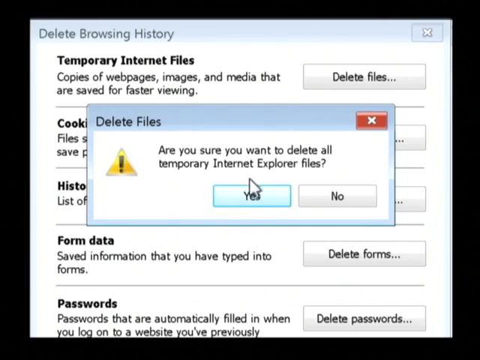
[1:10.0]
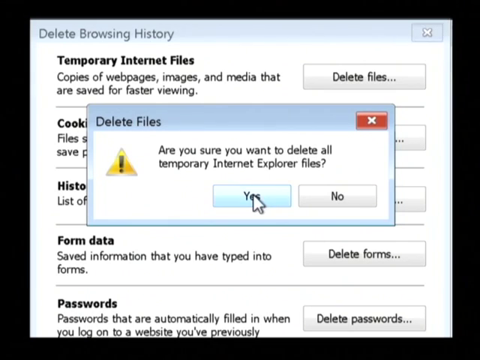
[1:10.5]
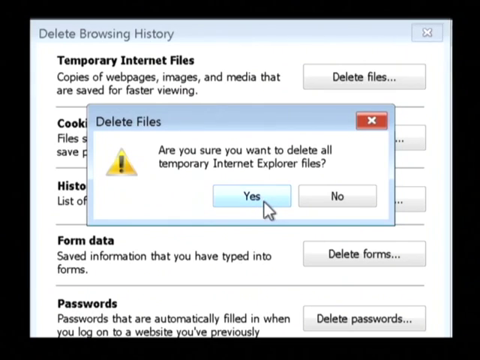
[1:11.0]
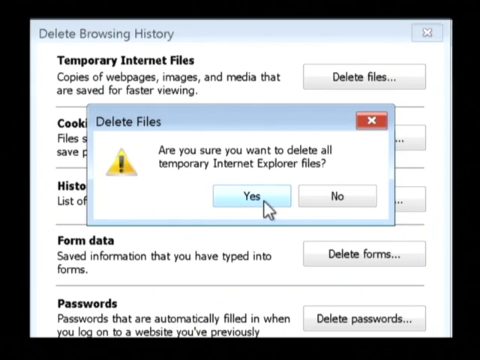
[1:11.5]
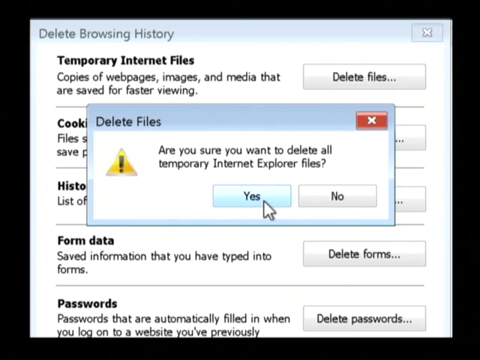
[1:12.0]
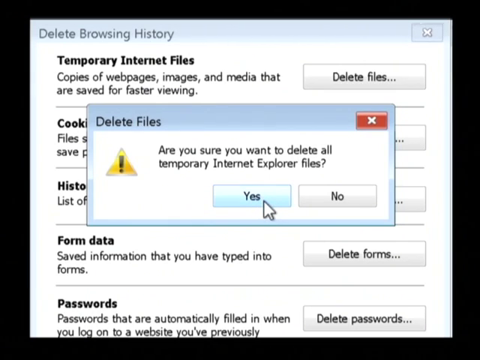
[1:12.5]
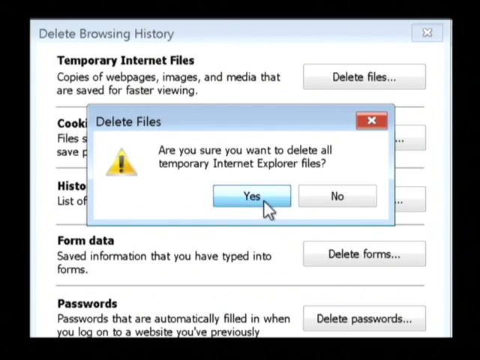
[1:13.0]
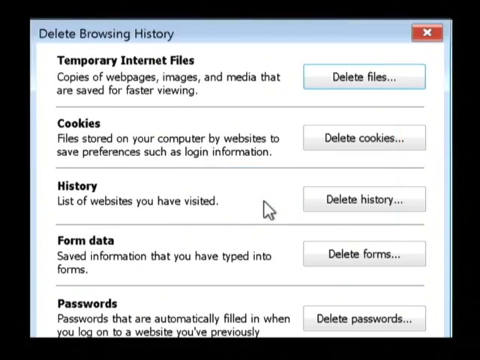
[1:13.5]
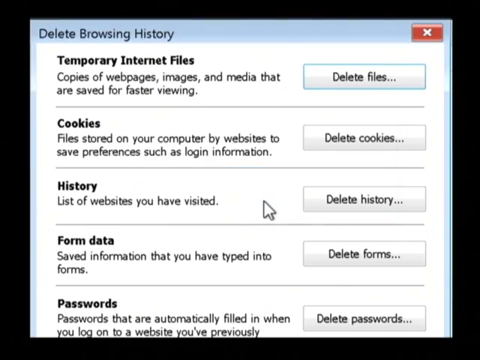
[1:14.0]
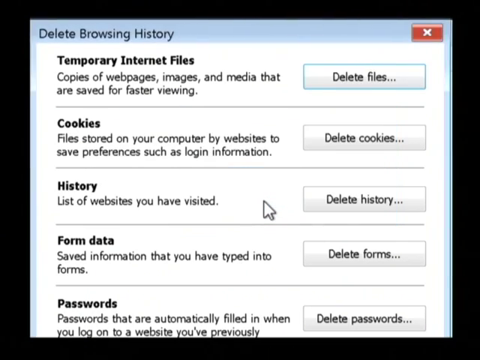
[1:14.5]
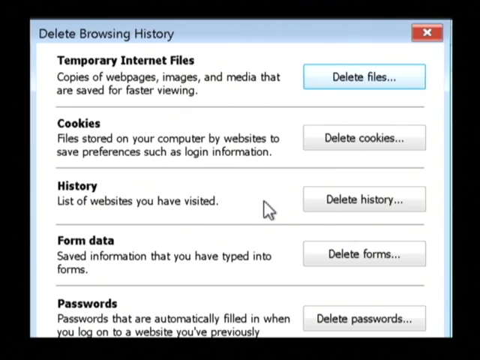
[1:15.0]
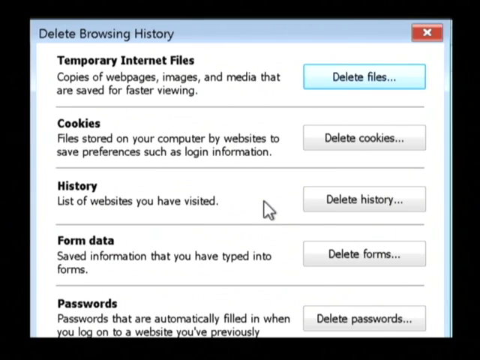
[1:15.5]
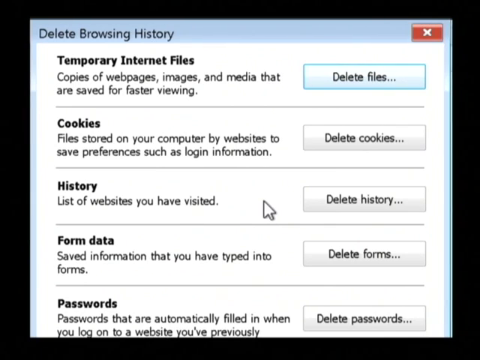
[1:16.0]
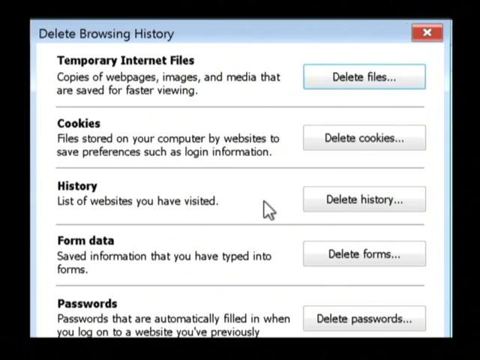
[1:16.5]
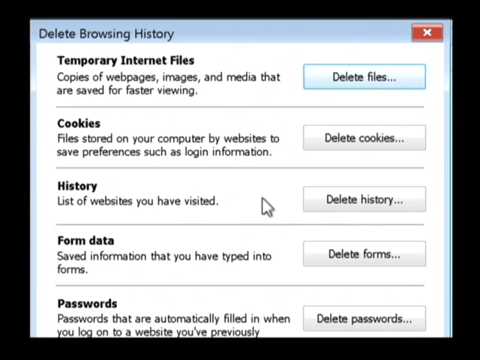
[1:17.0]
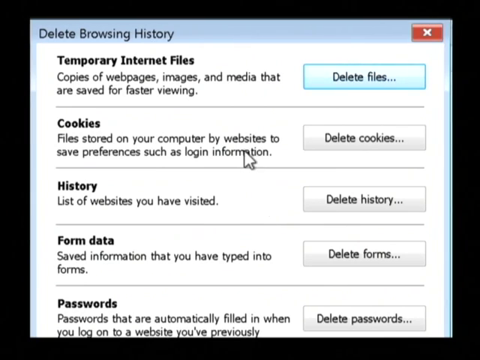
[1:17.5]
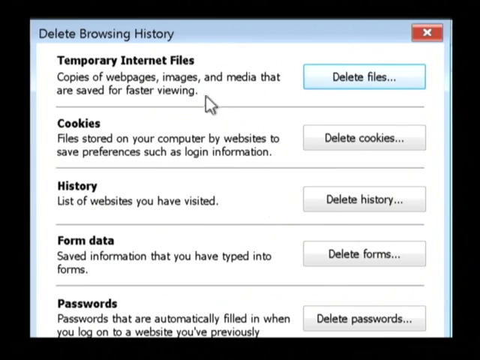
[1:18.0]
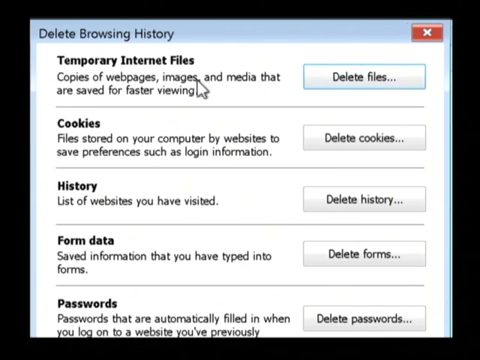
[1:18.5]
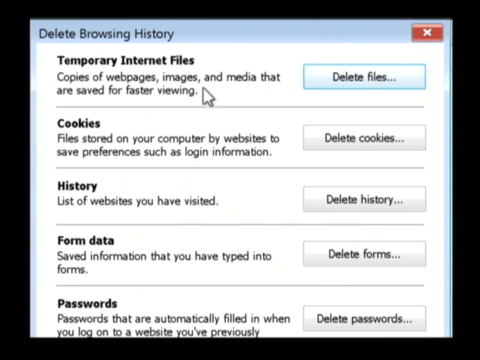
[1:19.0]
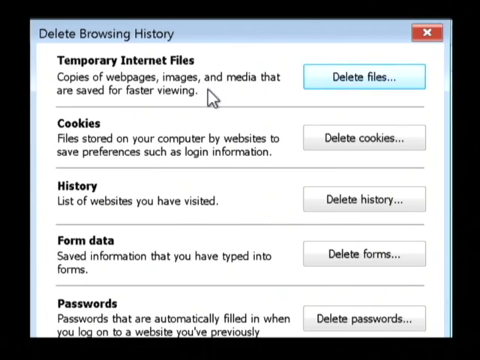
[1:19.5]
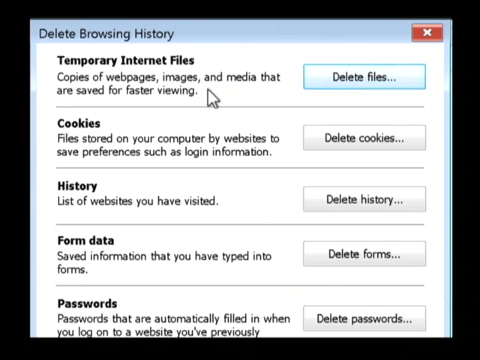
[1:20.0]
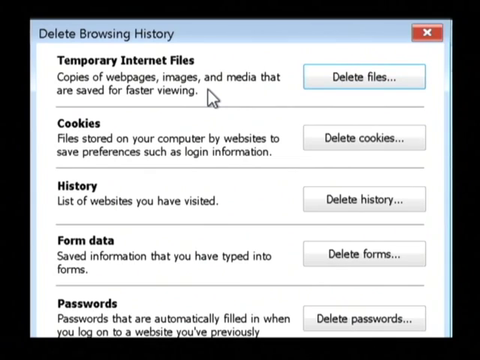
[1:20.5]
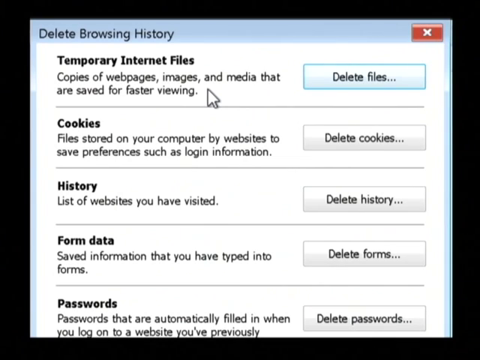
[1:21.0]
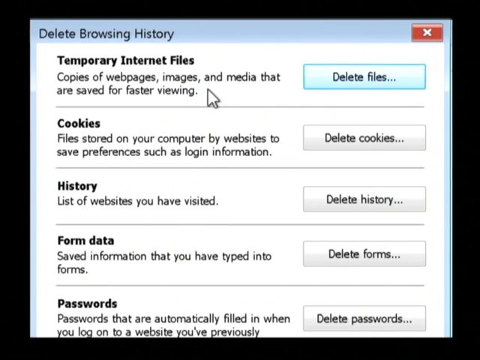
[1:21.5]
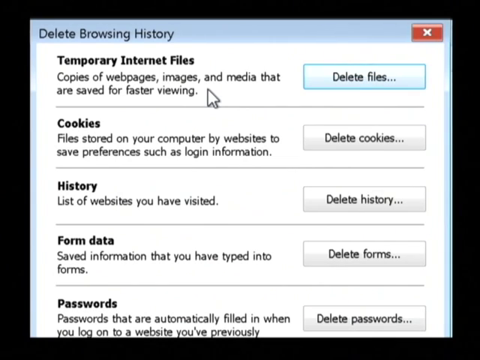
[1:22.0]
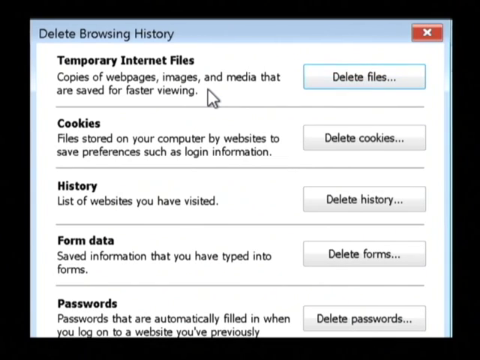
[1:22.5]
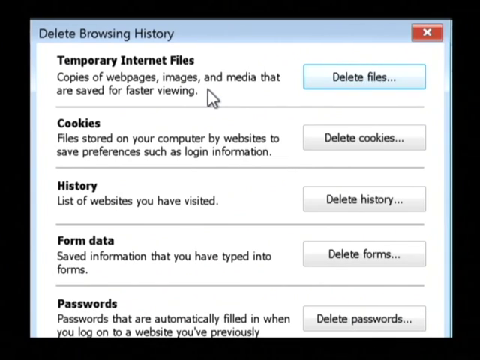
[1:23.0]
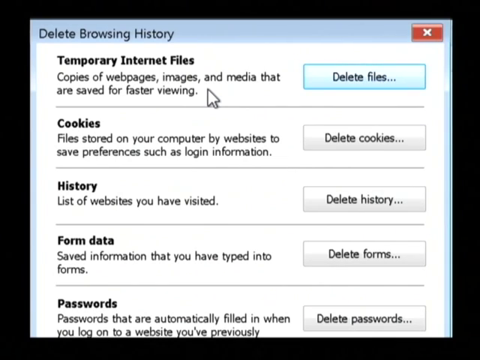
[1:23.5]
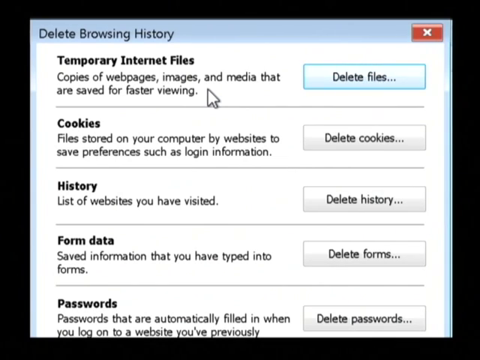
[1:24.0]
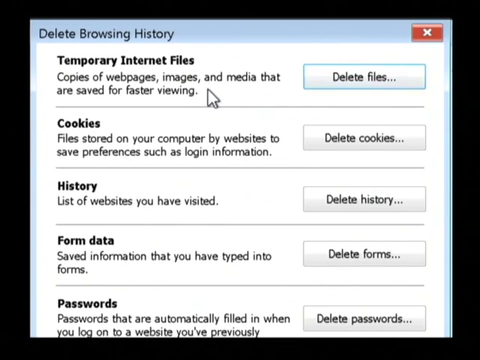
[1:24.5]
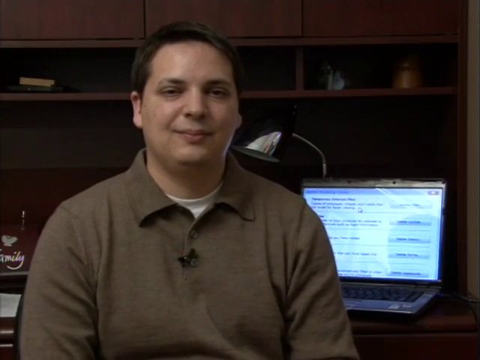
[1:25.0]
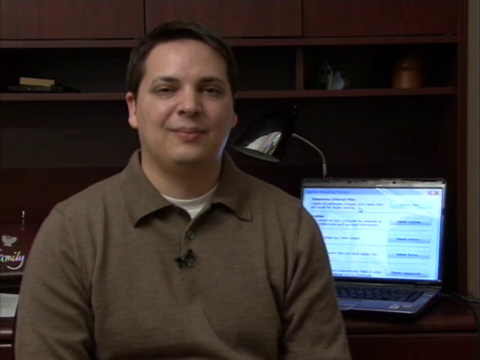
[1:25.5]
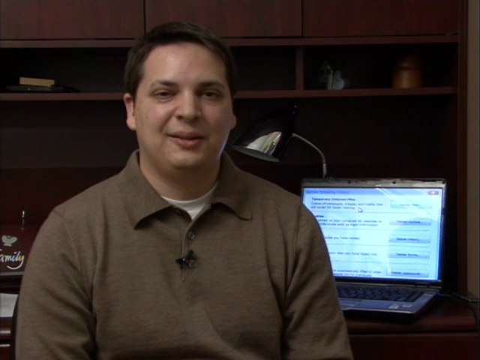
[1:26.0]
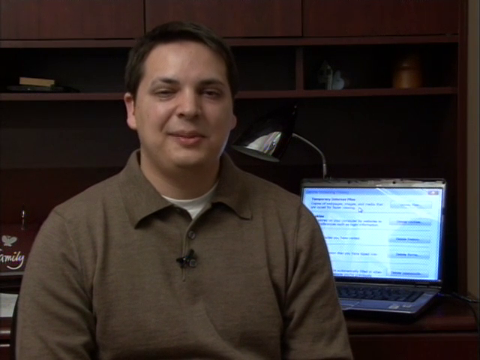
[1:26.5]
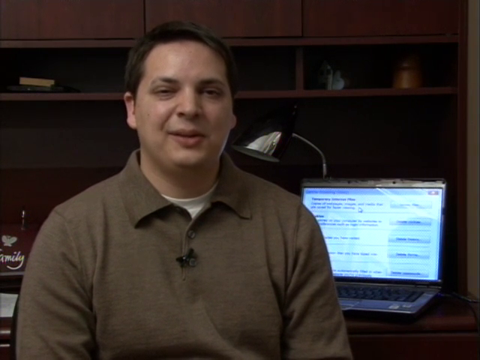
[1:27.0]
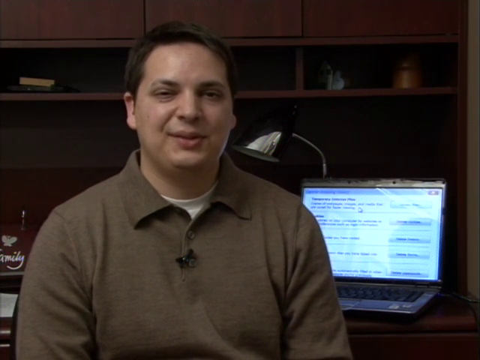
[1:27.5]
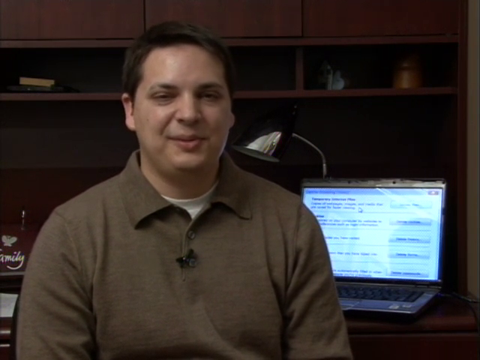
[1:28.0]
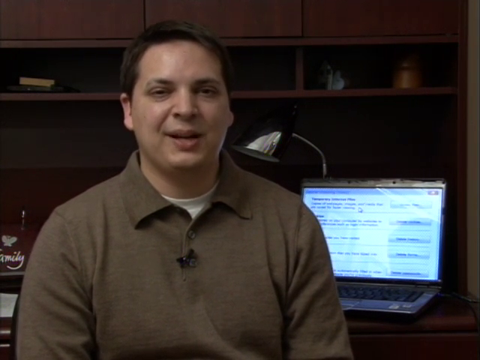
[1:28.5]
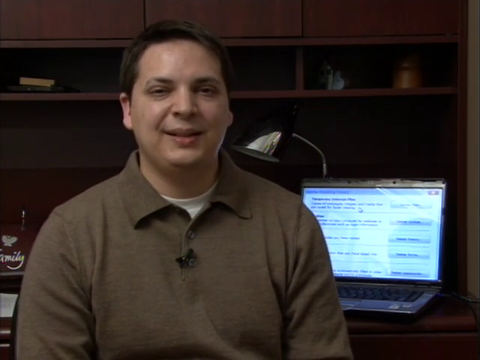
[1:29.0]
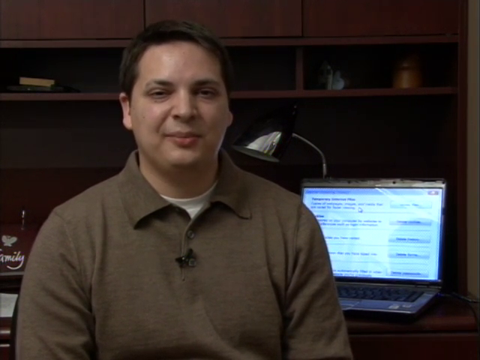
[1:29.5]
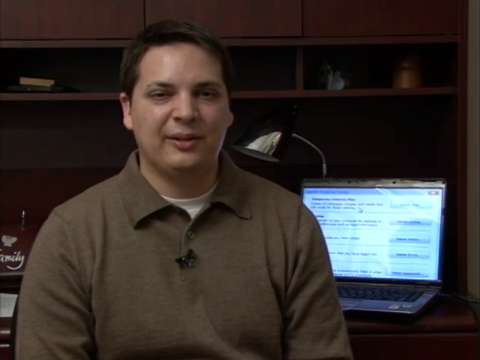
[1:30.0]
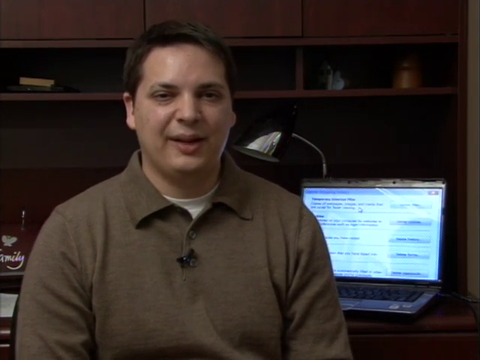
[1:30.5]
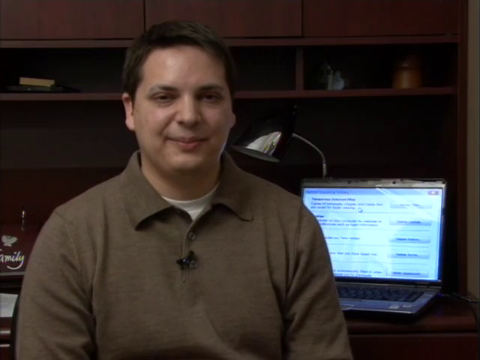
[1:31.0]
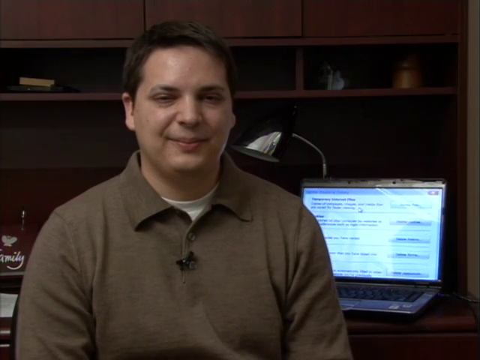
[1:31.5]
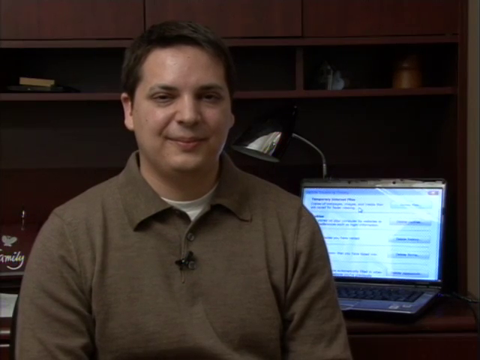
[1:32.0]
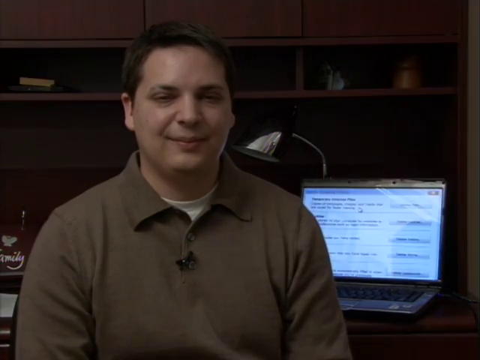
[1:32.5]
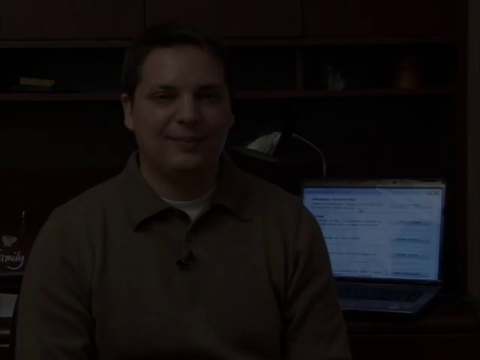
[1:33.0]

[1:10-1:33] Over the Delete Browsing History window, after Delete Files is clicked in the Temporary Internet Files section, a confirmation window appears. It is a small rectangular window in a blue Windows-style frame, with a red X in the upper right-hand corner and the label "Delete Files" in the upper left-hand corner. Just below is an icon of a yellow triangle with a bold black exclamation point in it. The wording is "Are you sure you want to delete all temporary internet explorer files?" There are two buttons: "Yes" on the left, highlighted in blue, and "No" on the right, not highlighted. The cursor clicks on Yes, a short operation animation goes by, and the operation appears to be done. The cursor slowly moves up to near the top of the Delete Browsing History window in the Temporary Internet Files section and remains stationary there. The video then quickly cuts back to the young man sitting in front of his desk, facing the camera, in front of his laptop at the computer desk. He says something briefly, smiling slightly, and the video fades to black.